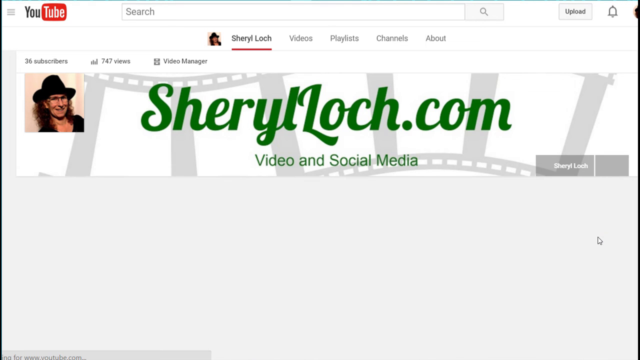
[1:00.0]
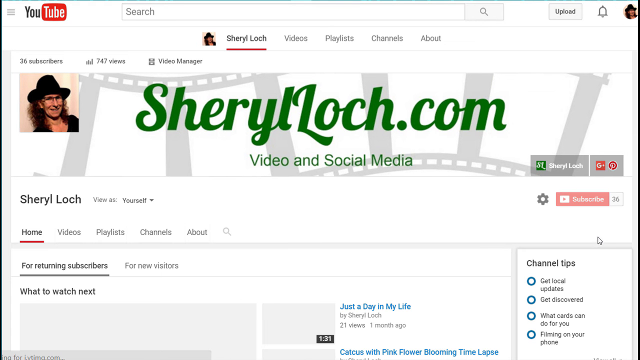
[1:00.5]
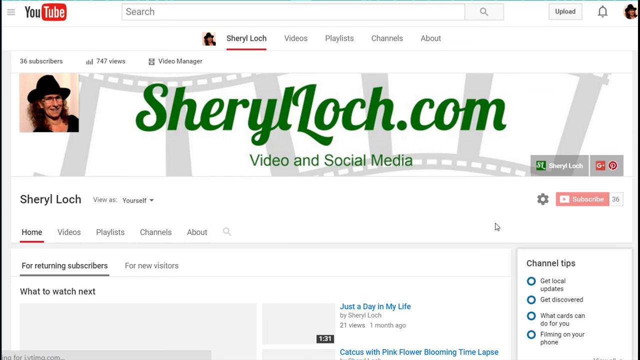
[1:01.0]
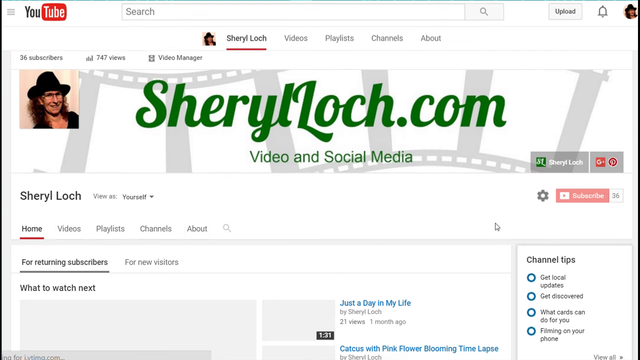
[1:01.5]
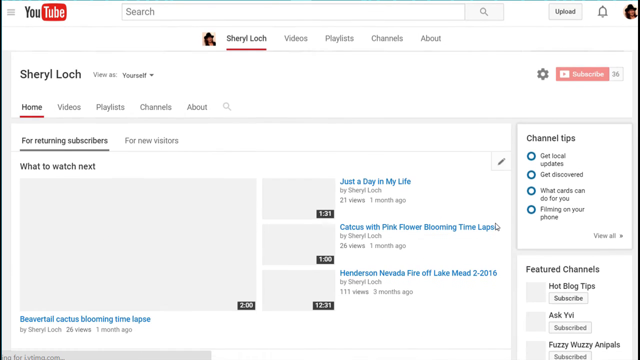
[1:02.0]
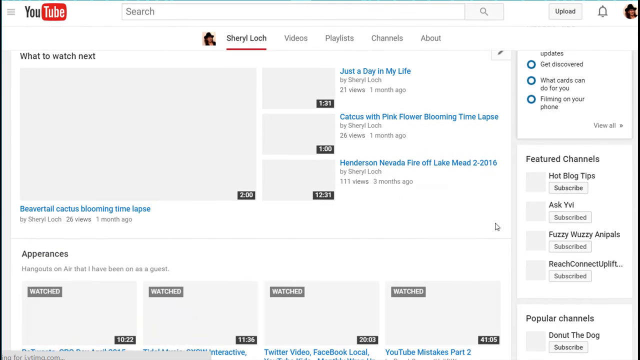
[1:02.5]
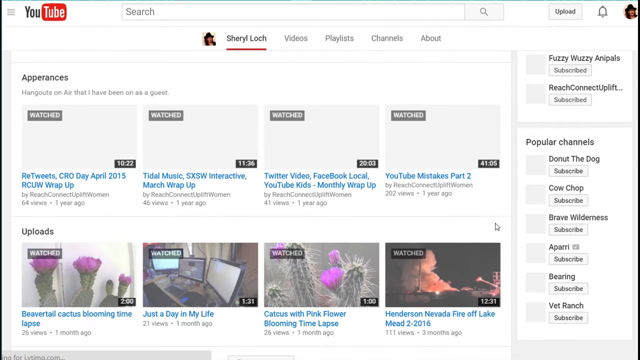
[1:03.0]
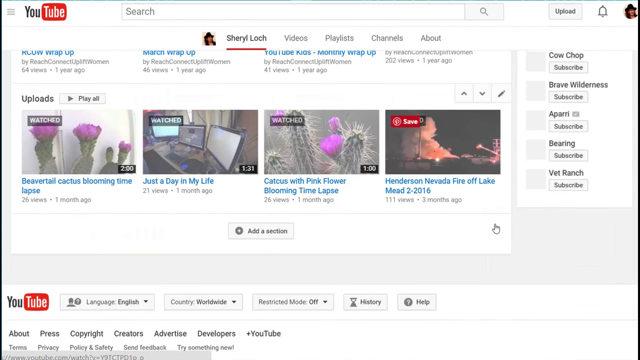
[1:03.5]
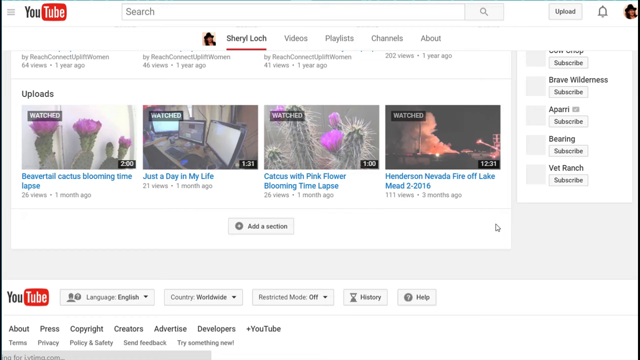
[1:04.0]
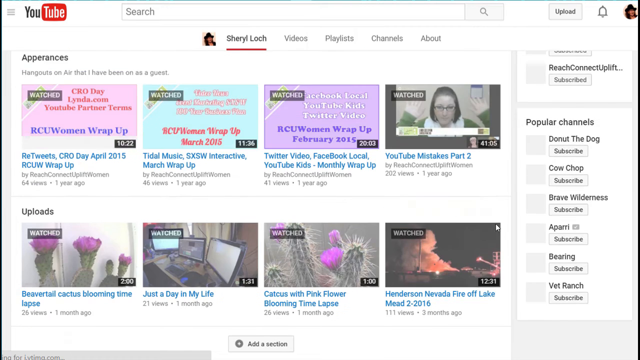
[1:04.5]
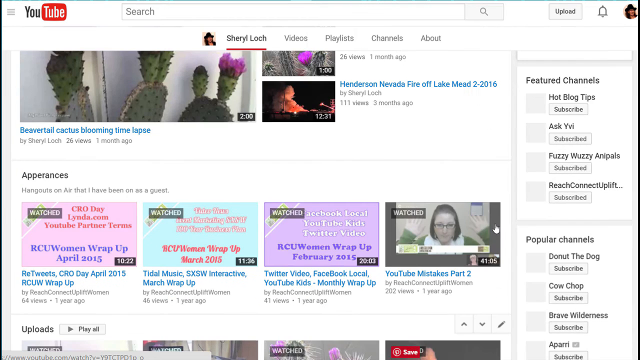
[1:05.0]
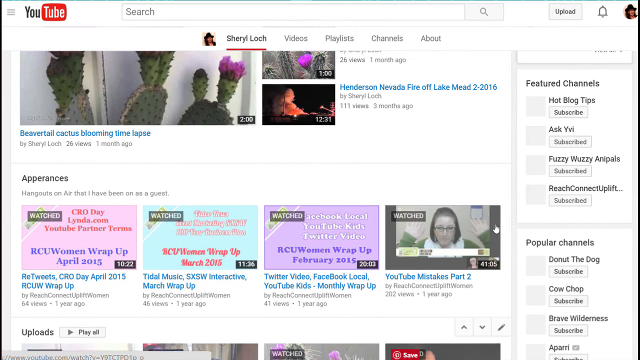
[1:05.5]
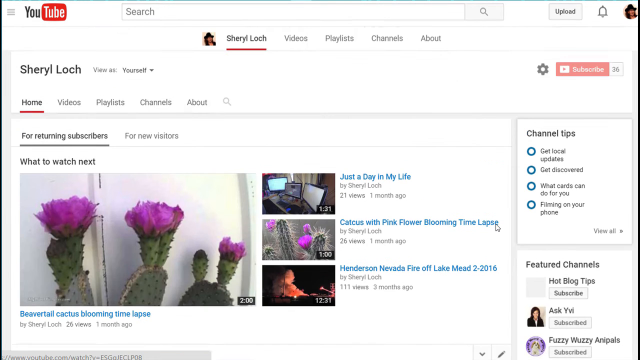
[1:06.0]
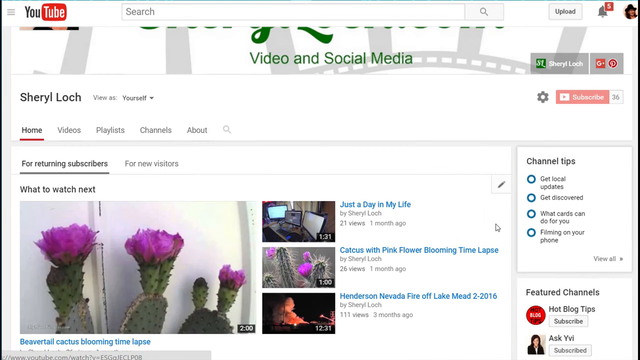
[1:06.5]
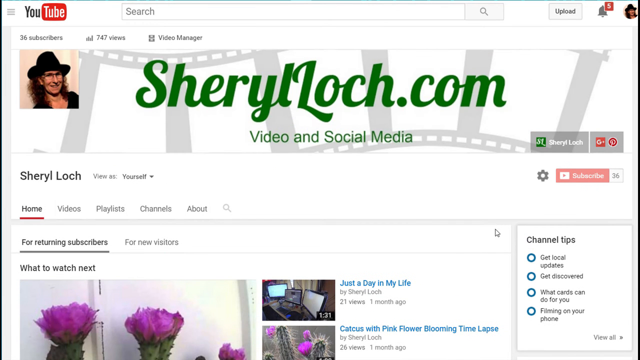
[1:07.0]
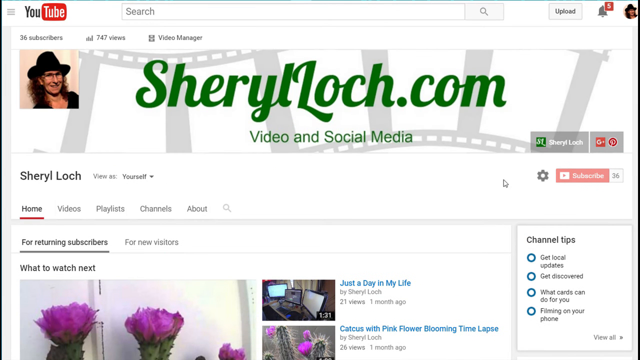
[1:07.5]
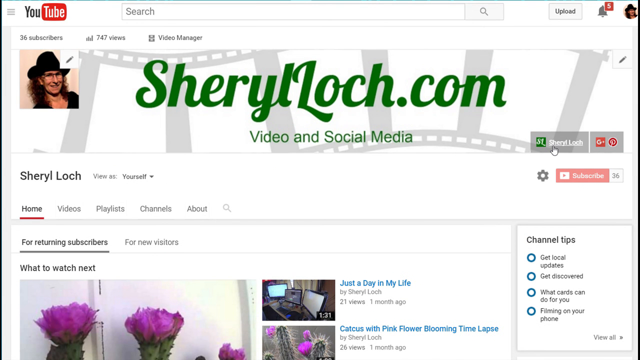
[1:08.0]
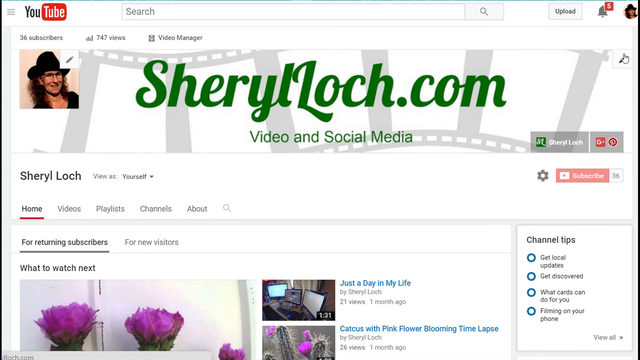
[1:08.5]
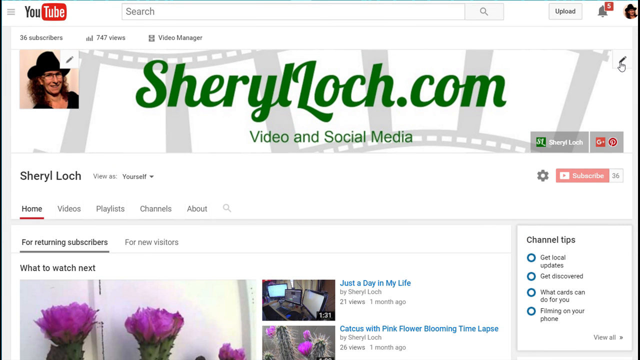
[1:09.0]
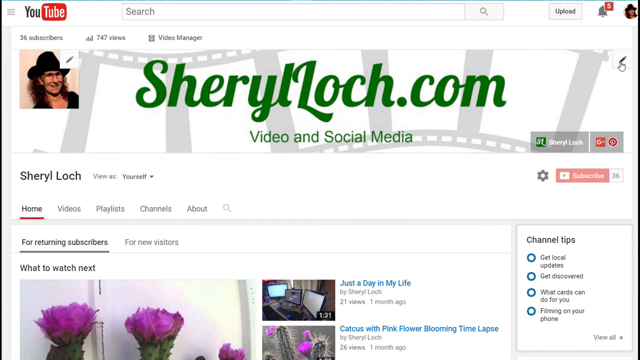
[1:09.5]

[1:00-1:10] The home page of the "cheryllock.com video and social media" site is shown in more detail. The view moves down the page, showing many different video clips, and moves around the page, exploring. The cursor clicks in a different section, the page scrolls up and down, and then the cursor clicks the pencil icon in the top right corner of the website, which is the "edit" icon. A few videos on the site say "watched" on them.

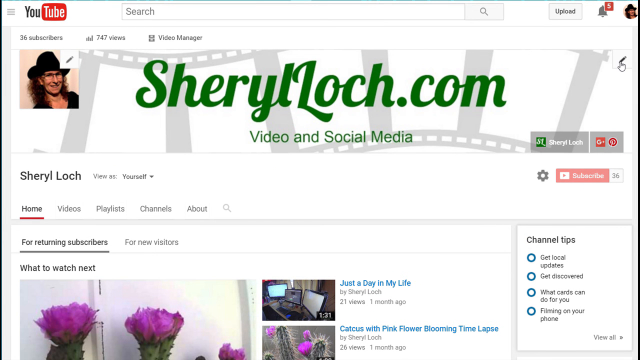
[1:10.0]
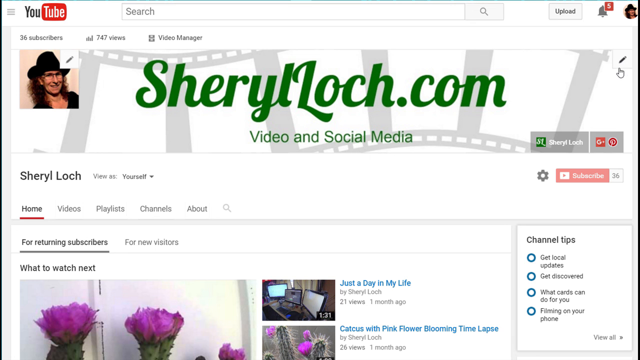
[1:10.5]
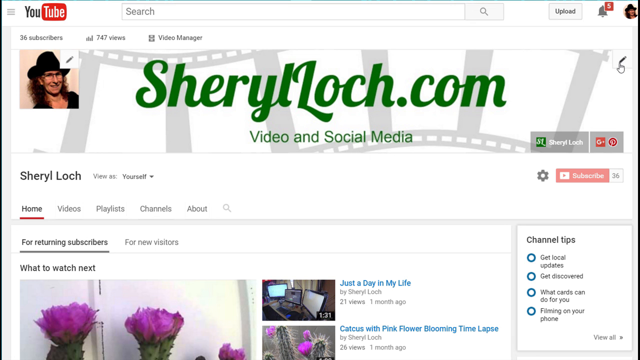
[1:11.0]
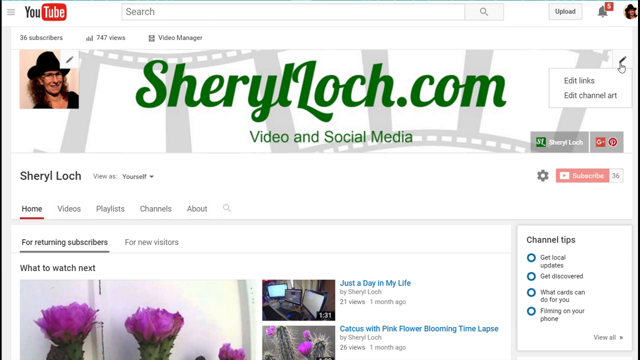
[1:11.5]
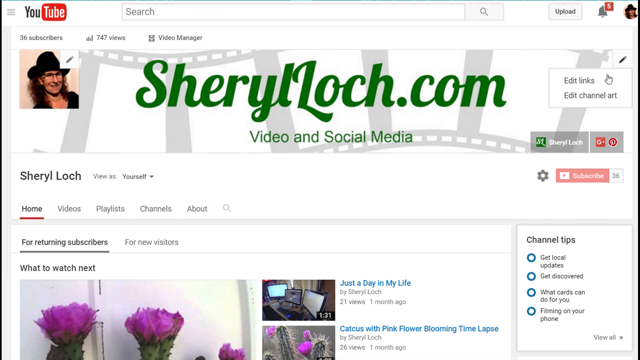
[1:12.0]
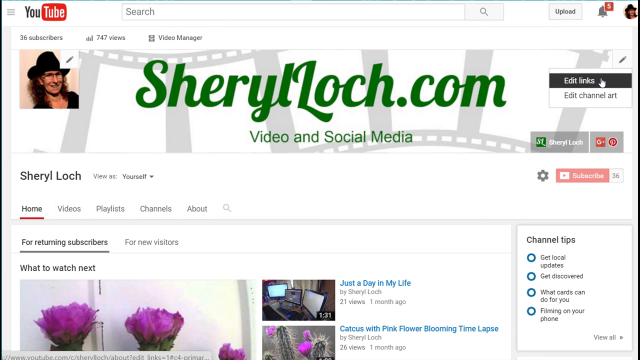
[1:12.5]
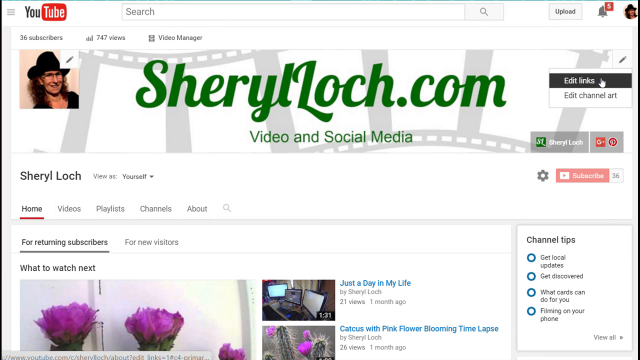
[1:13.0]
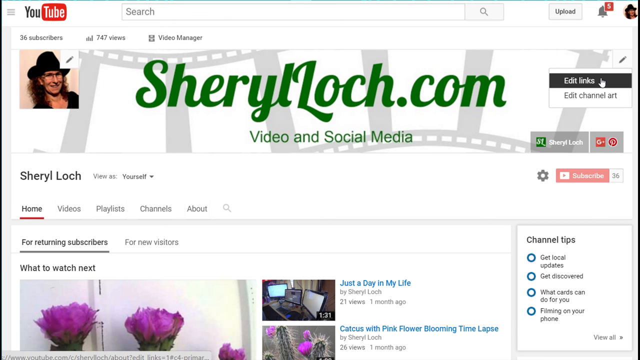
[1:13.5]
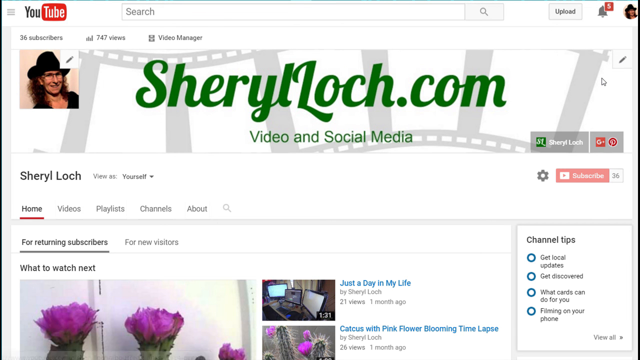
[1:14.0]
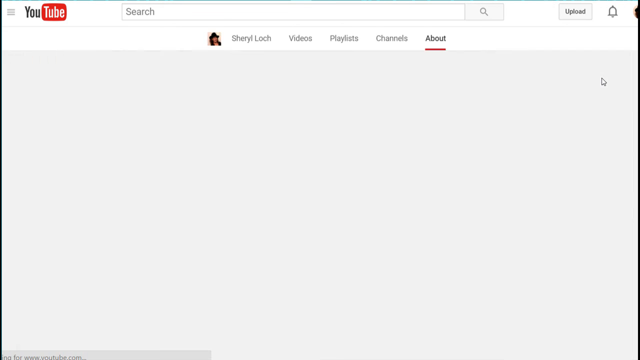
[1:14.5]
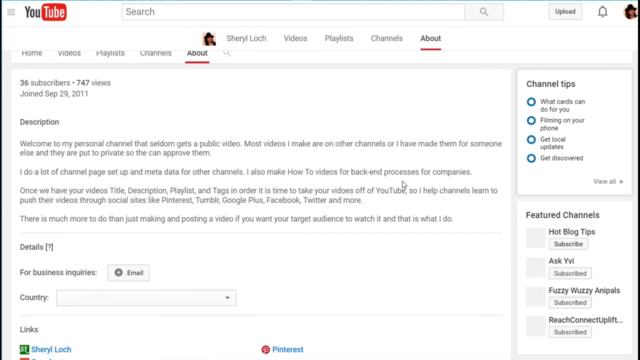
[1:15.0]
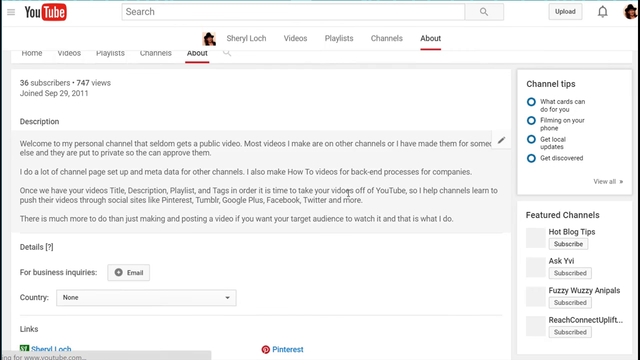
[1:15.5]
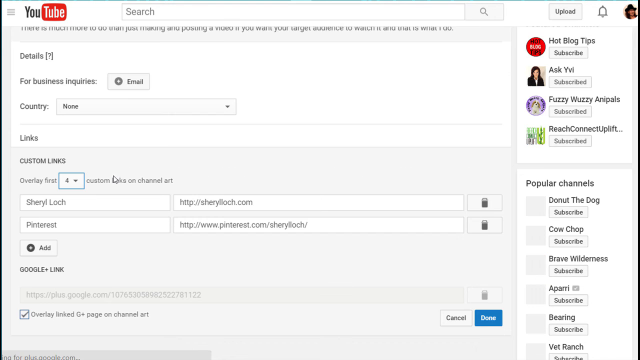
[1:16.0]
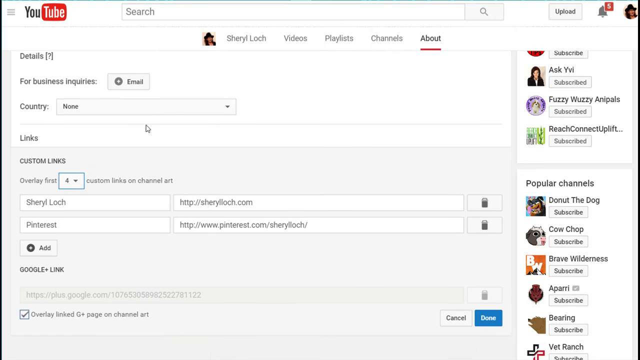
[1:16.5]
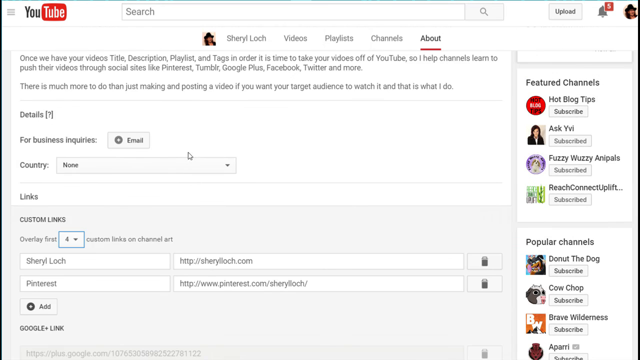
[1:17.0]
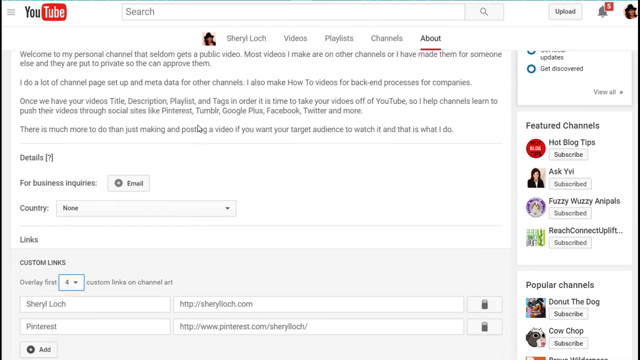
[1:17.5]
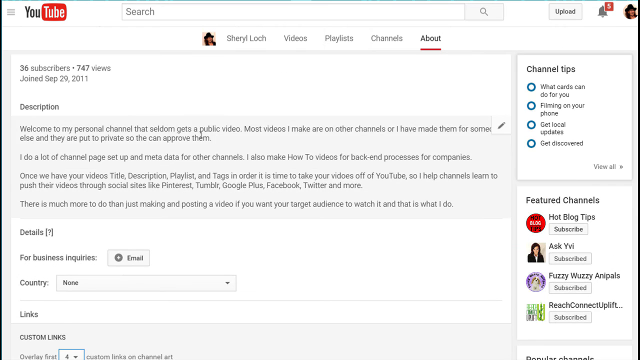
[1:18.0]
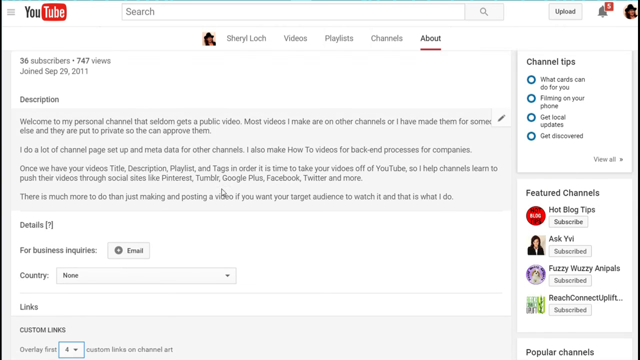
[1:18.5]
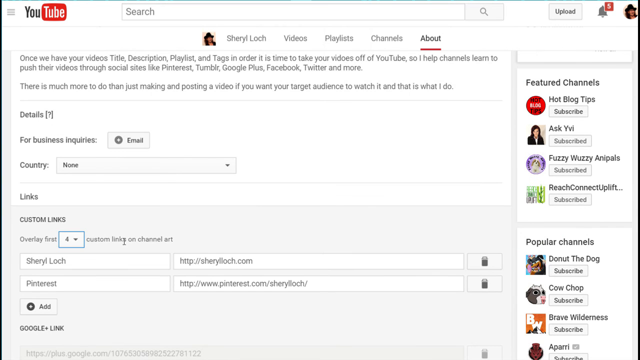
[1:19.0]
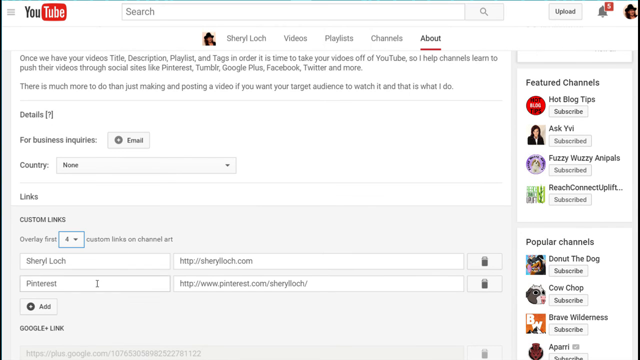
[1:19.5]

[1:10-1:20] The Sheryl Locke homepage is shown, with quick flashes of different pages that can be accessed within the website, sheryllocke.com video and social media. A selection of videos posted by Sheryl Locke is shown underneath the title of videos. The first one, at the top of the selection, is titled "Just A Day In My Life", was posted one month ago and has 21 views. Another video underneath it has a similar number of views. There is also a description of how to subscribe and what looks like an online form to fill in to subscribe to the channel. In the top right corner of the homepage is the notifications icon, showing five notifications.